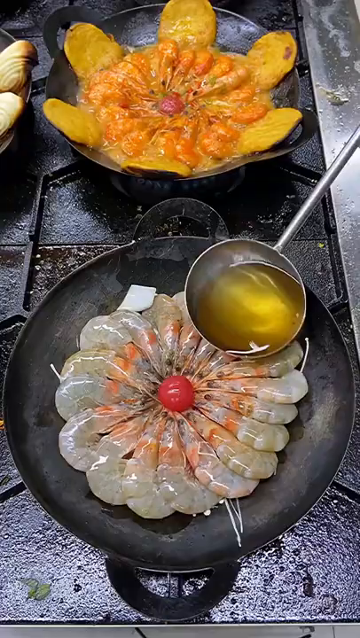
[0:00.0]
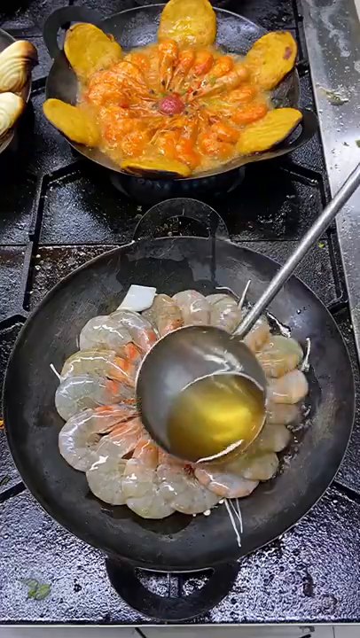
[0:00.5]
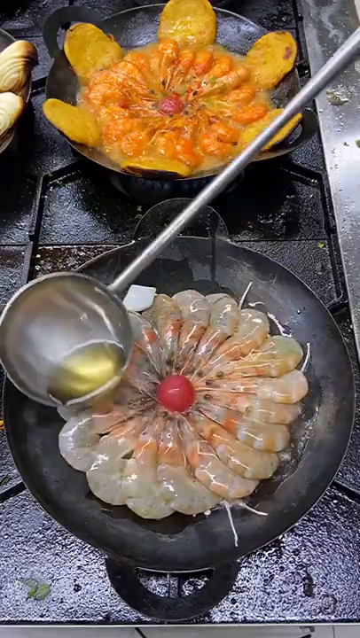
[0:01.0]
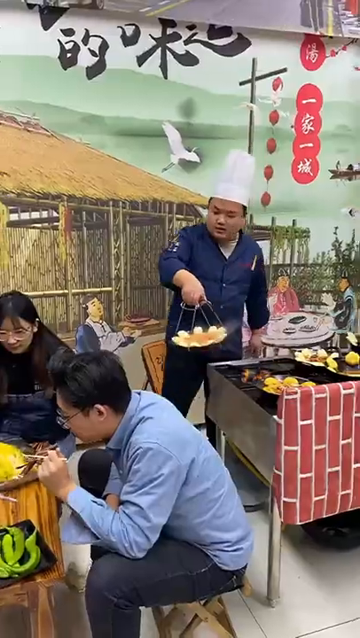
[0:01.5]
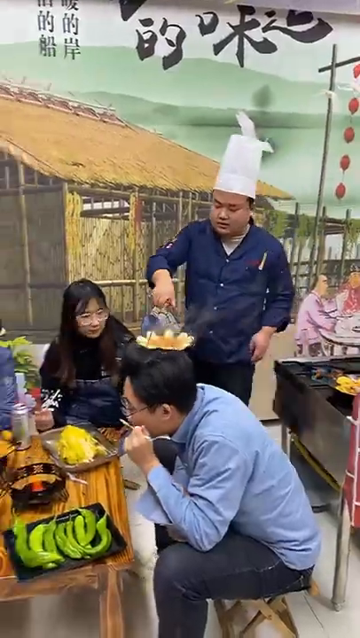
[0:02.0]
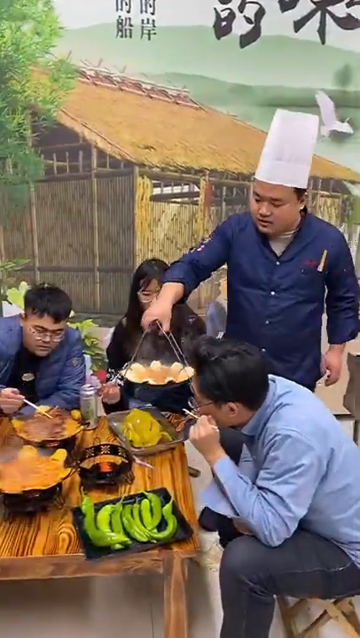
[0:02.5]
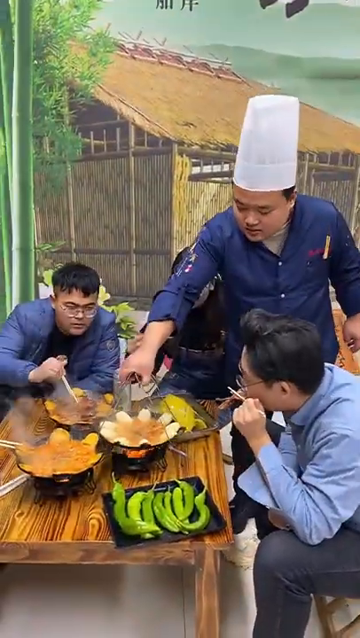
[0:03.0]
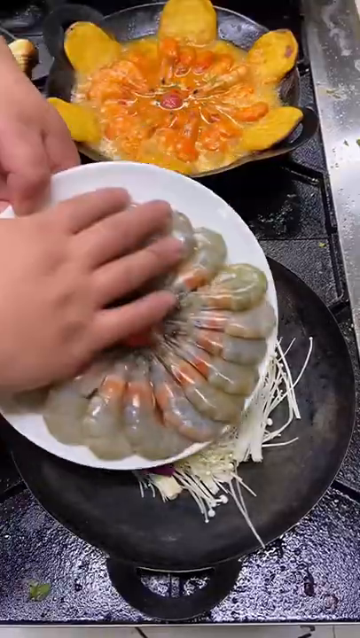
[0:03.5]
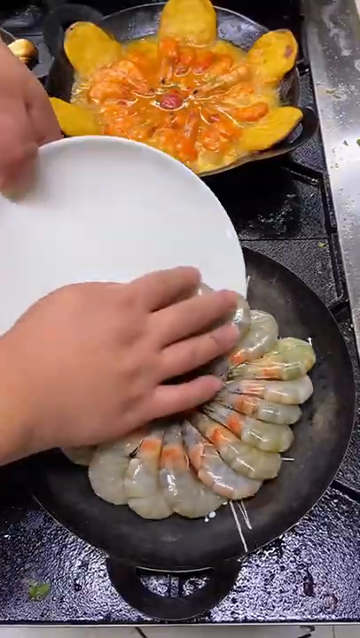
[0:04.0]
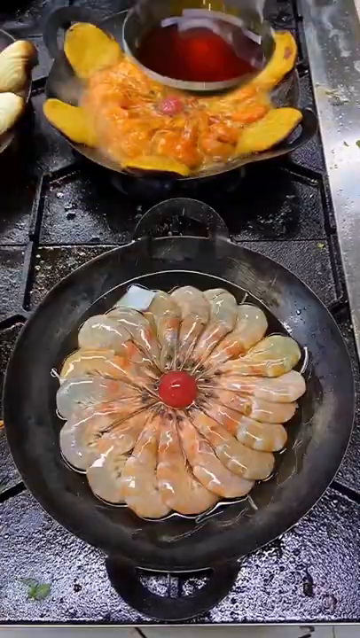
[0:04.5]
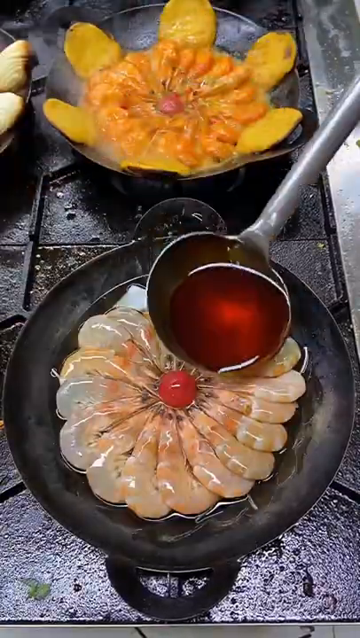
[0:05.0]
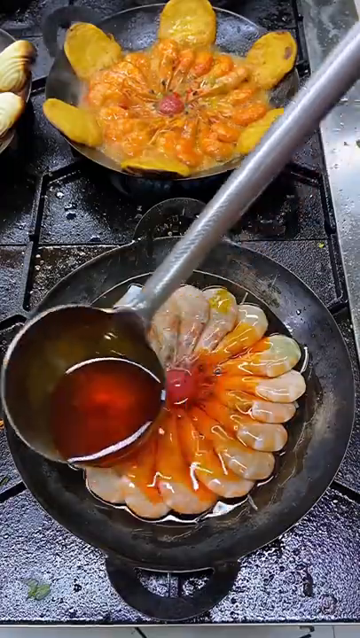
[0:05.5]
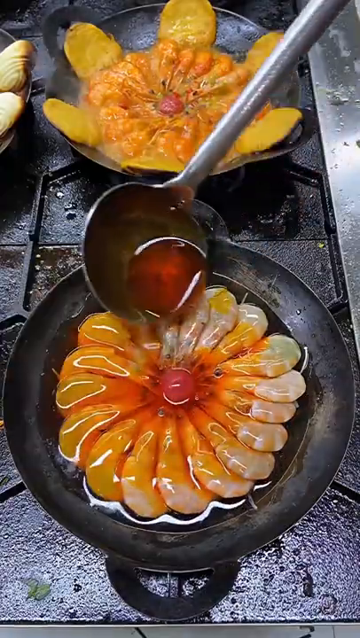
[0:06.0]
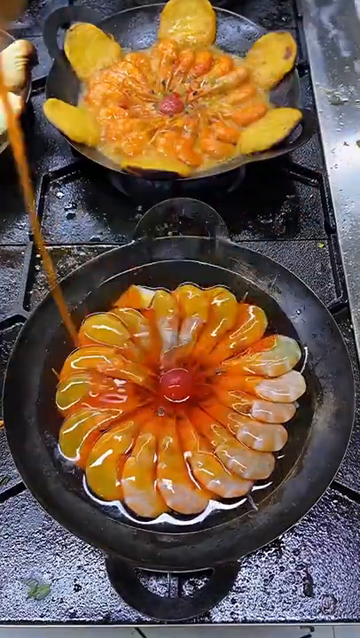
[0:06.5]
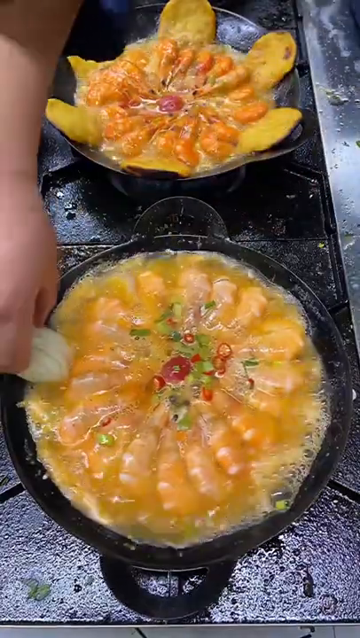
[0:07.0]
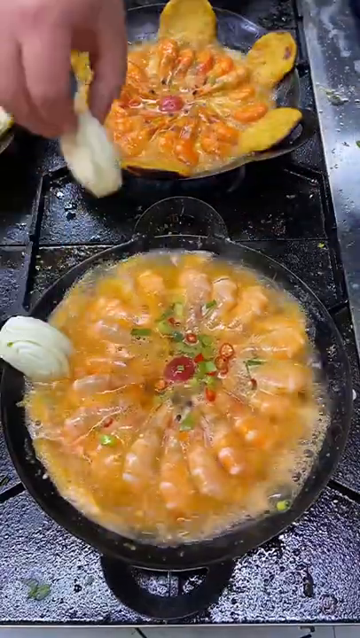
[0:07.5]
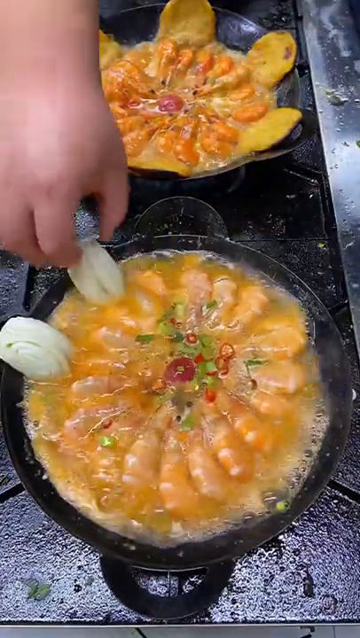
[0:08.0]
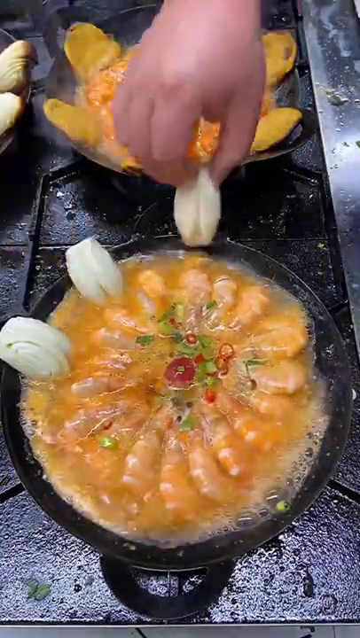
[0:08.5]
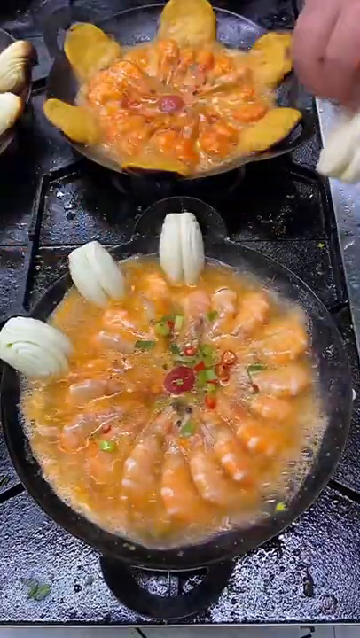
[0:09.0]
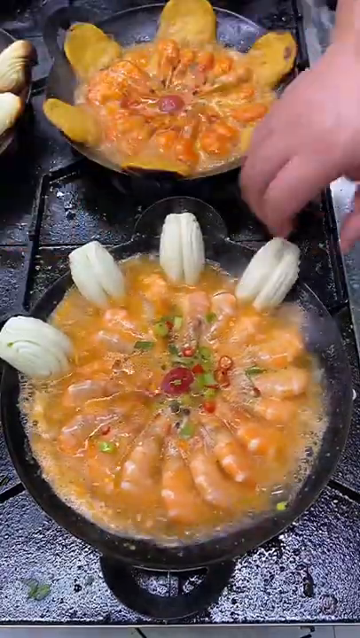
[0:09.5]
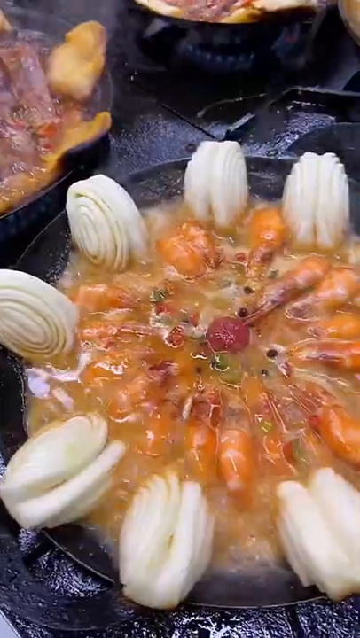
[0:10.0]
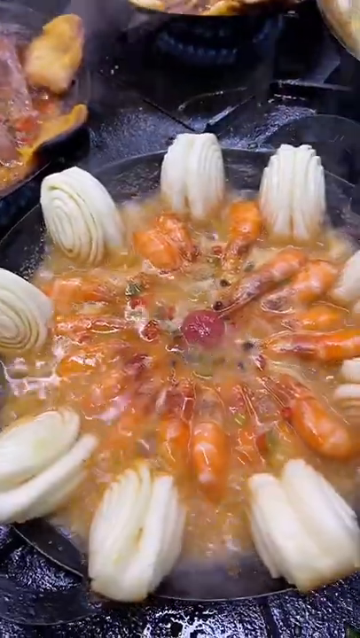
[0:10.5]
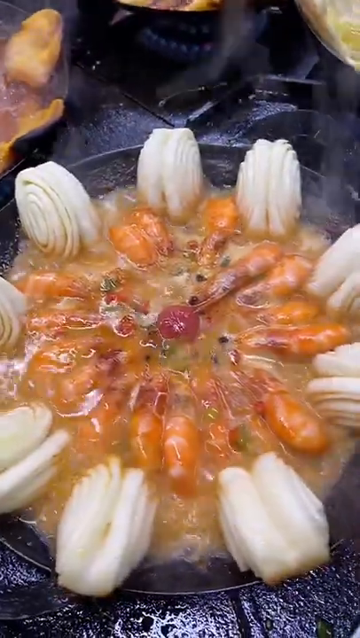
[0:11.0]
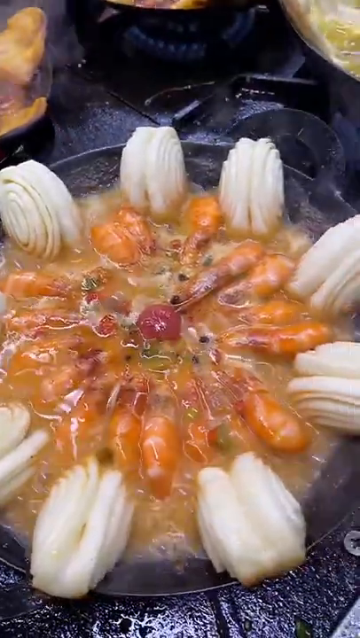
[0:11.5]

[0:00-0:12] Some Asian individuals sit at a table that appears to have burners built into it. In a short shot, a chef prepares some shrimp, which are oriented radially in a circle in a pan. Some pasta noodles of some sort are added around the end, along with lots of spices, a rich red-colored oil, chives and other vegetables. The food cooks and changes in color. The chef, using wire handles that grip the wok, carries it over to the table and sets it on one of the burners in the center of the table. People are eating. The setting looks like it is indoors in a very modest restaurant, with some plastic wall tapestry behind the diners. The food looks incredible.